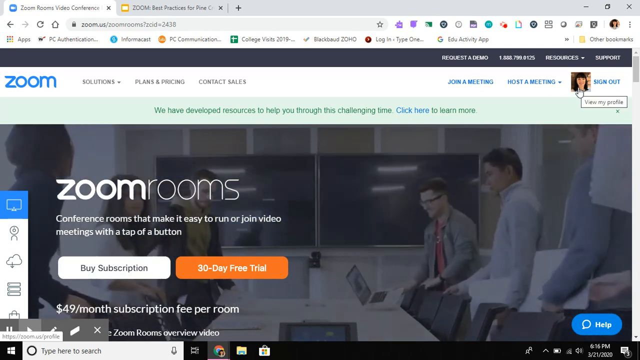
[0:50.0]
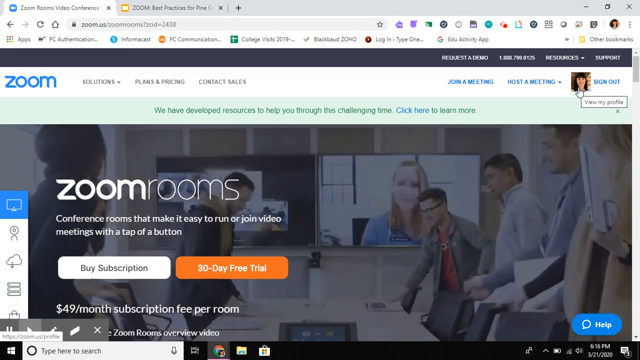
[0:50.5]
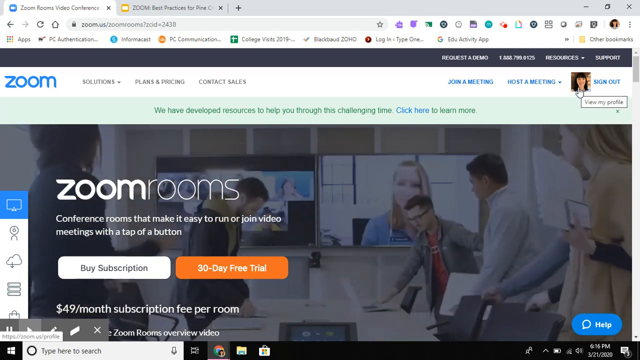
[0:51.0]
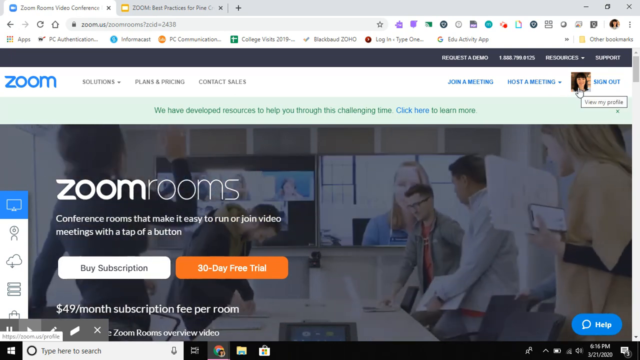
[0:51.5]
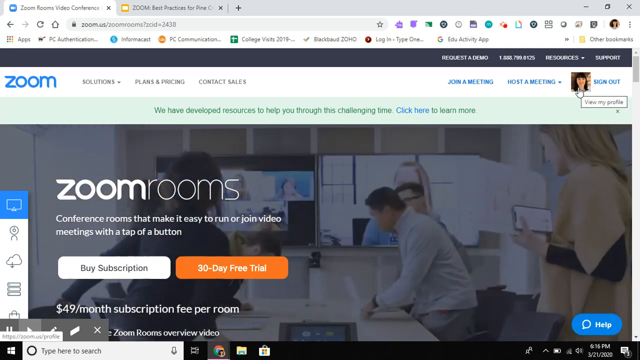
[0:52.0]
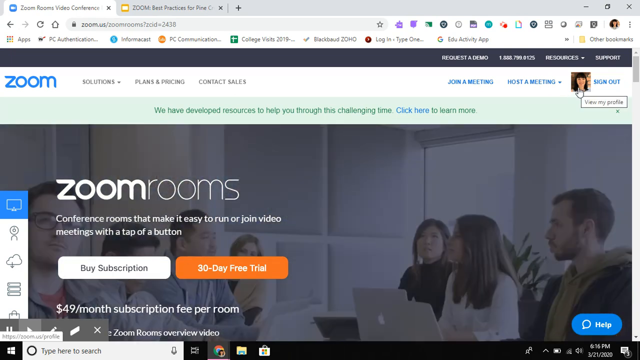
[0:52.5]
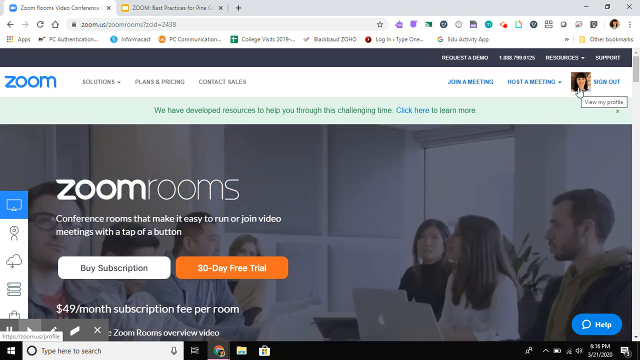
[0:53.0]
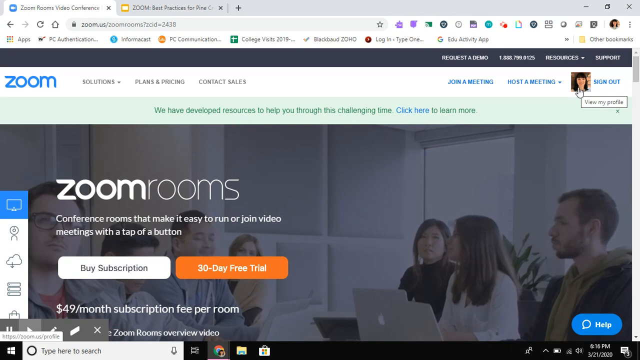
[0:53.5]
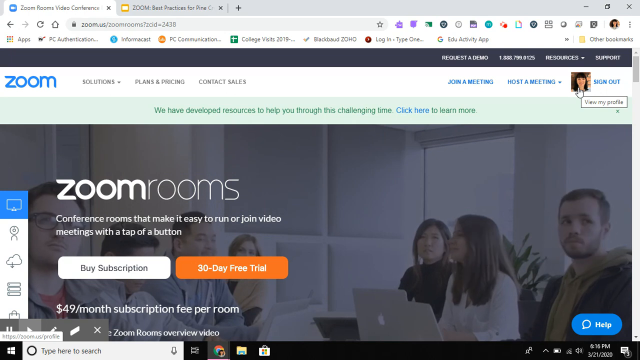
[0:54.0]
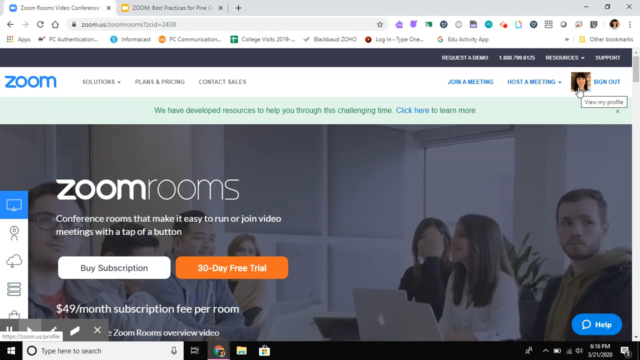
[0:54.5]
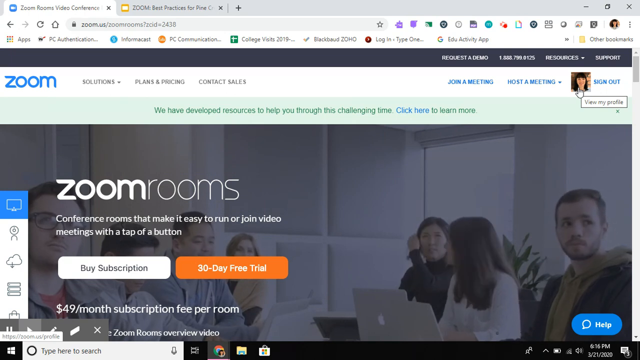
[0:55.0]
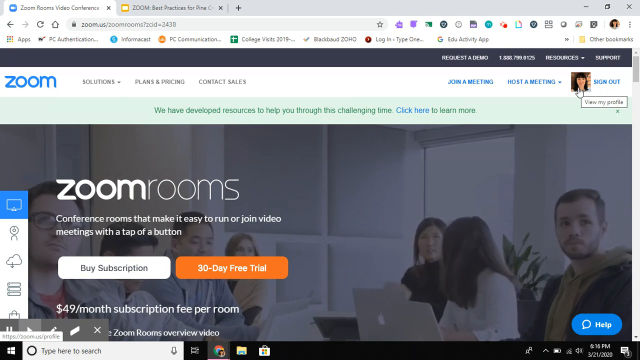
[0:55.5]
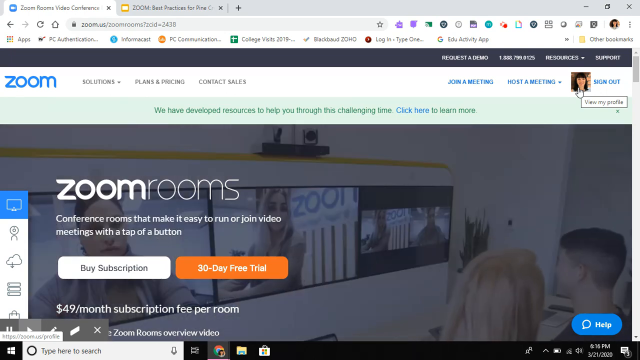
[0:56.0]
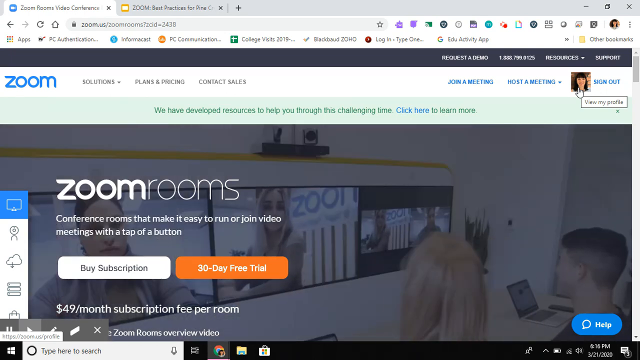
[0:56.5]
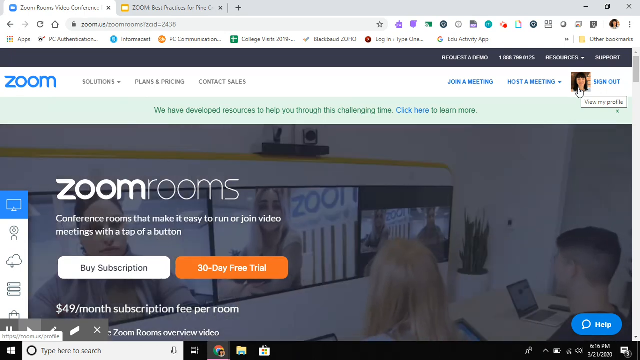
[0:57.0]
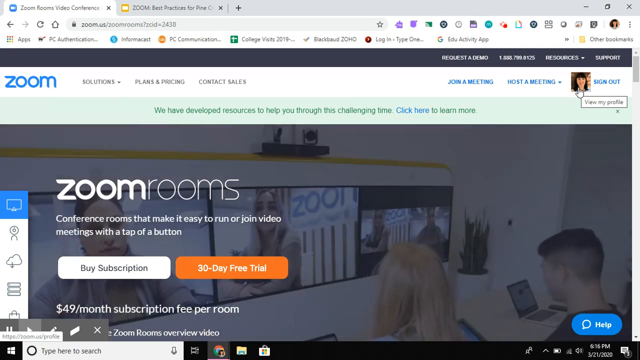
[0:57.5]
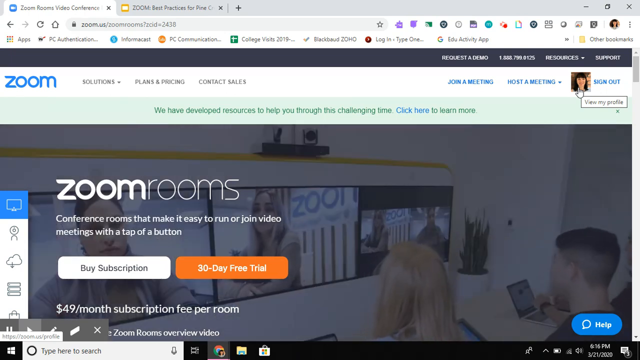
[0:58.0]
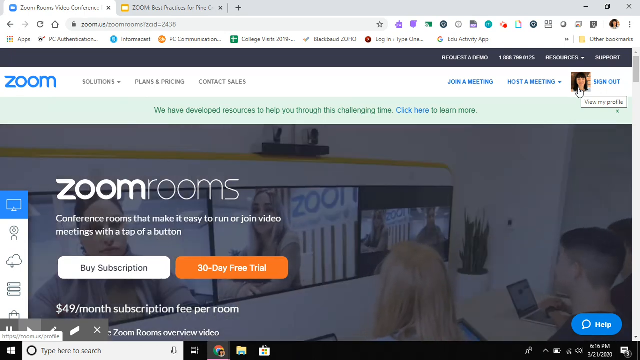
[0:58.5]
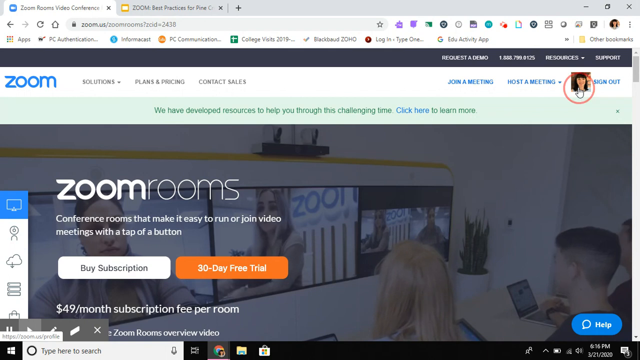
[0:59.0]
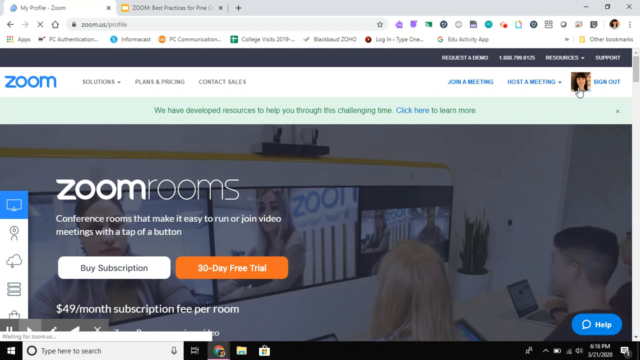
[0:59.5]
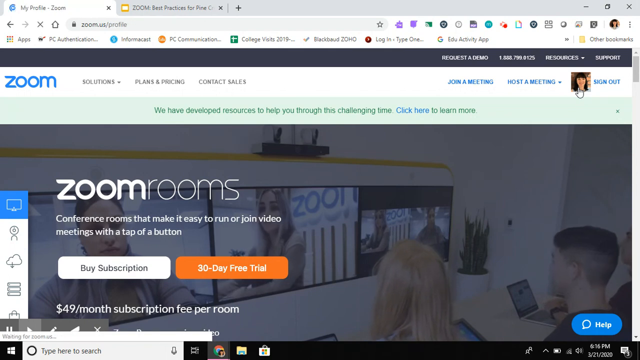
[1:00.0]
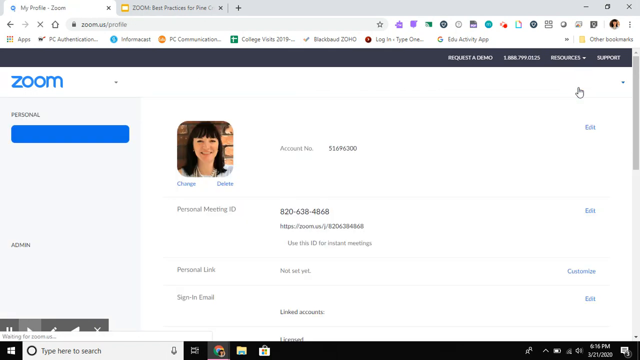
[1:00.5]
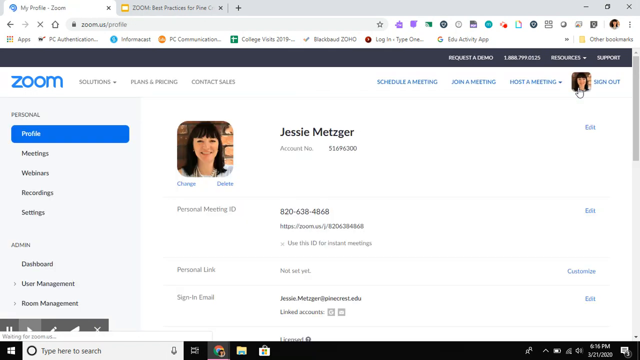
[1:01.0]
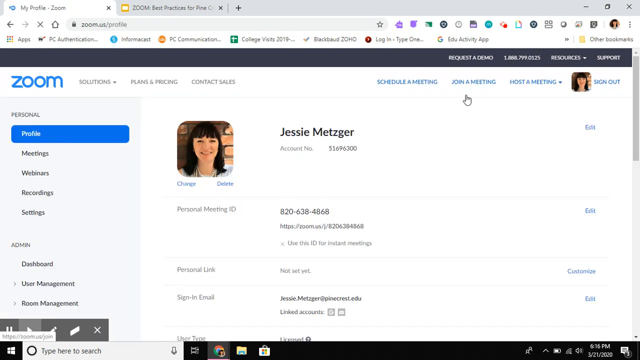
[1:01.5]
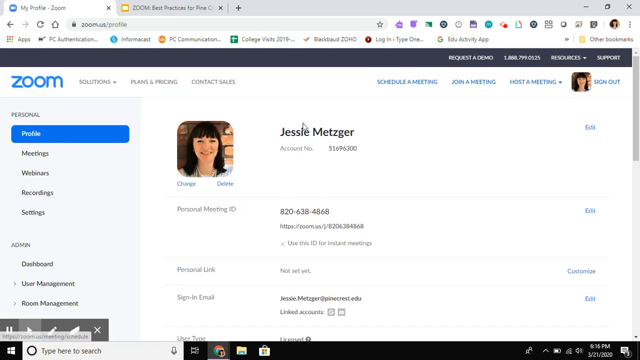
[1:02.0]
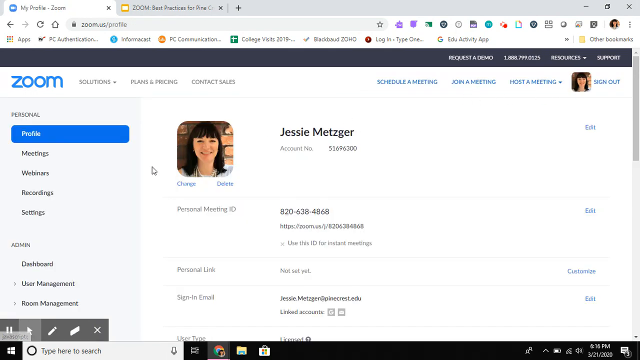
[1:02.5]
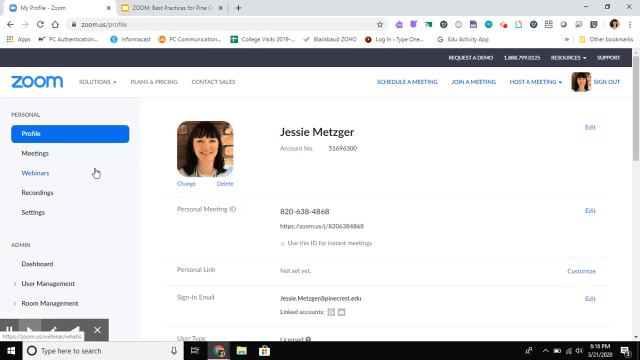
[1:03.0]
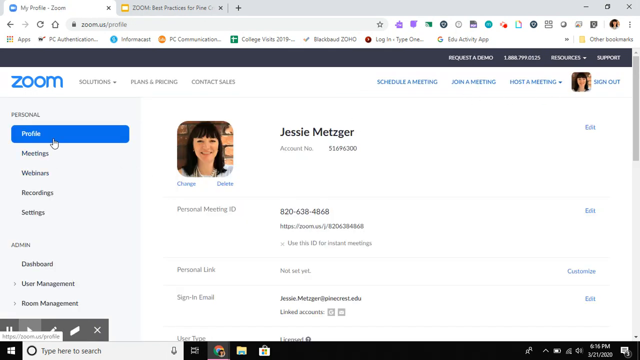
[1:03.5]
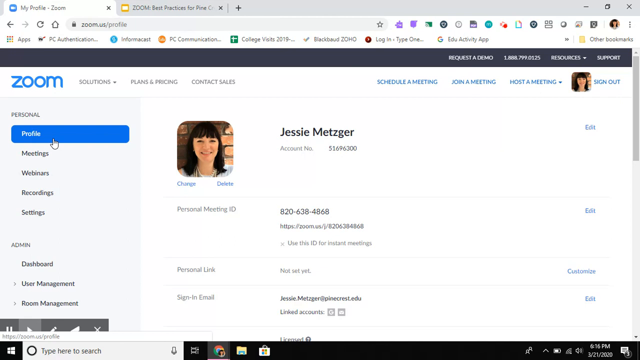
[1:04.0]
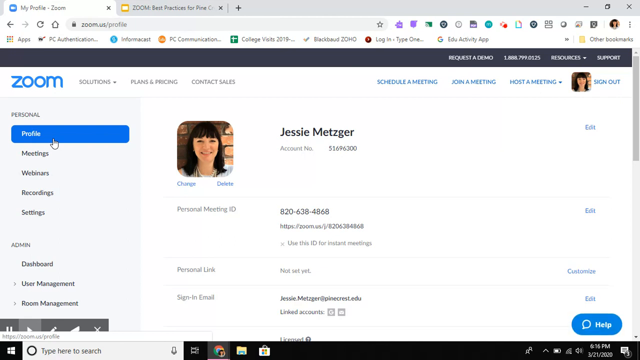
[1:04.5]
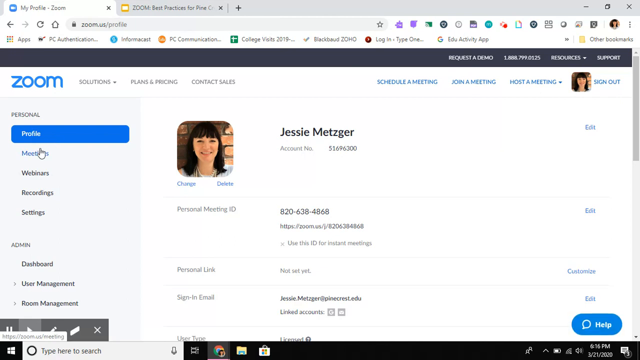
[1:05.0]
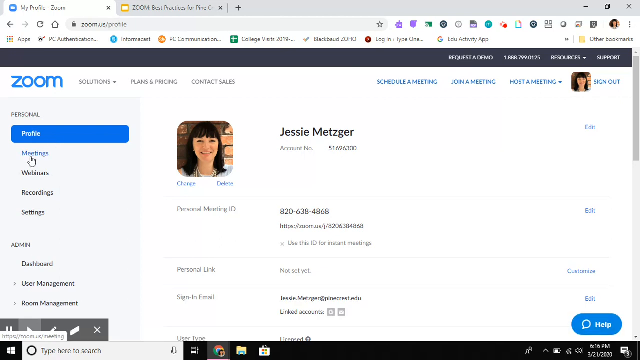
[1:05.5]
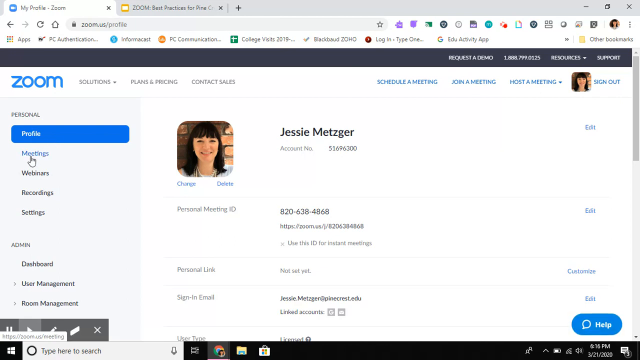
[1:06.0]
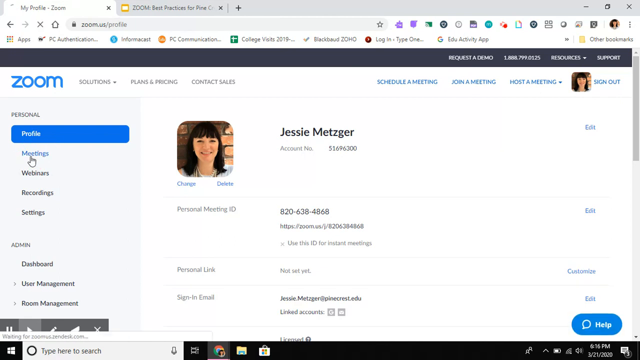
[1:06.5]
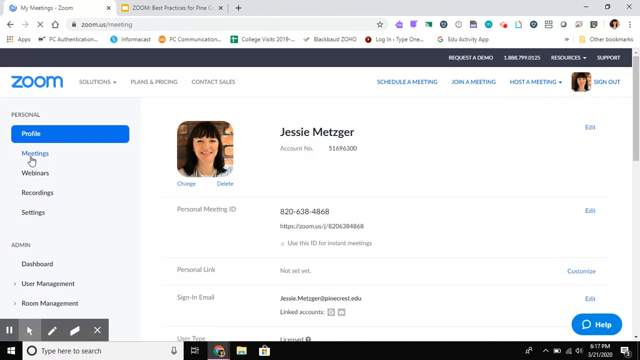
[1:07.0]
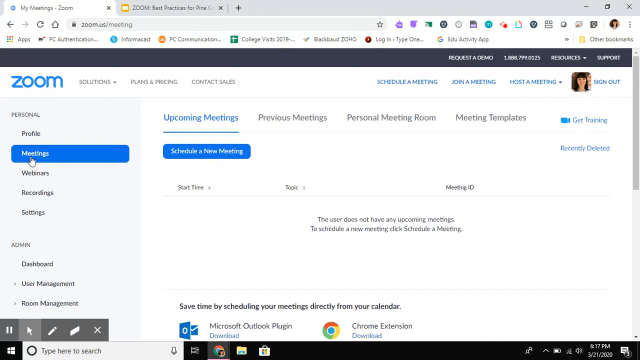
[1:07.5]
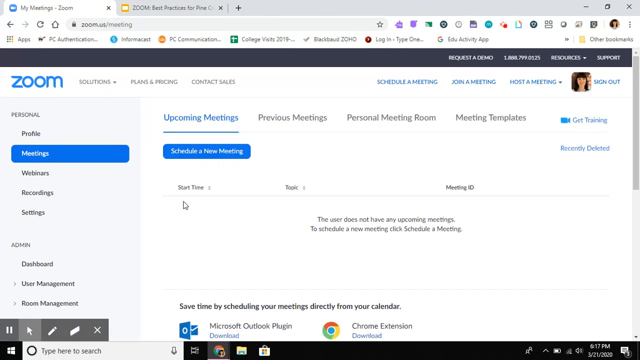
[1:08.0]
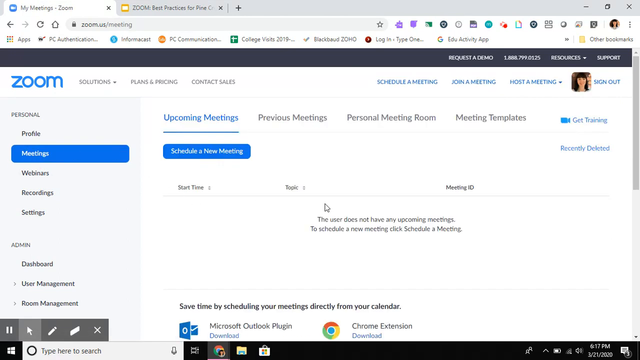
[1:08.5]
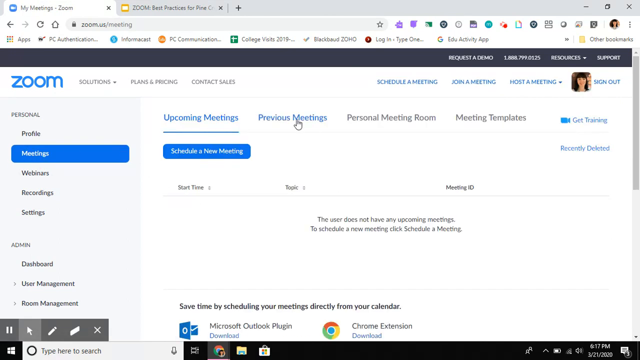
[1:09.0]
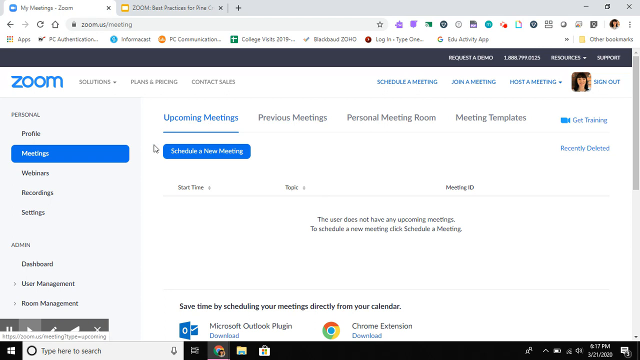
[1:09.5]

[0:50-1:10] The table in the room is white. The people pull out their seats, probably to sit down. Across the room, two monitor screens display the people joining the meeting: the screen on the right shows a single person, while the screen on the left shows many people joining the live meeting from afar. Some of the people in the room carry MacBooks and some carry iPhones; they have their MacBooks open on the table, and some talk to one another while others focus on the monitor screen showing the remote participants. On the left side, text says "Zoom Rooms, conference rooms that make it easy to run or join video meetings with the tap of a button." Below are two buttons: a white one that says "buy subscription" and an orange one that says "daily free trial".